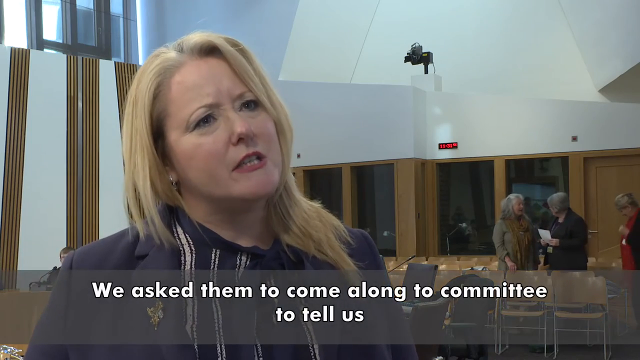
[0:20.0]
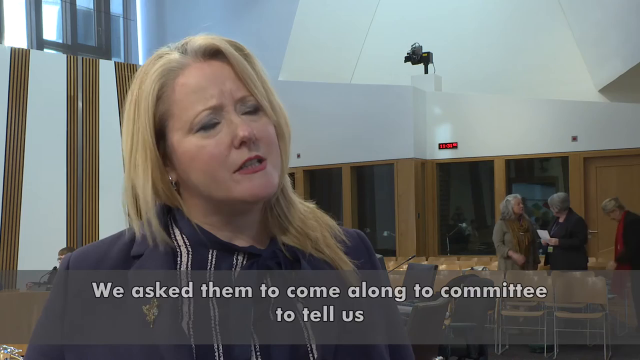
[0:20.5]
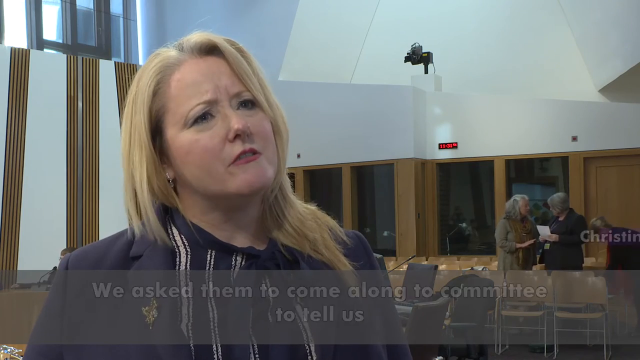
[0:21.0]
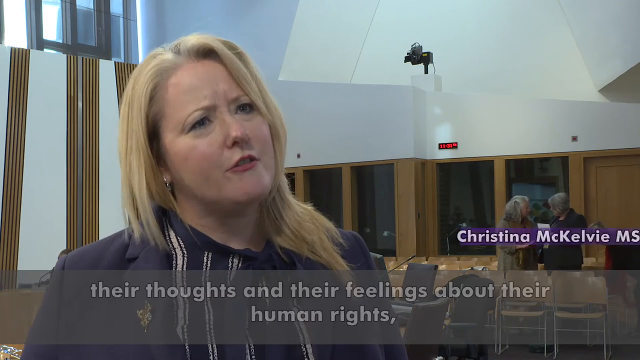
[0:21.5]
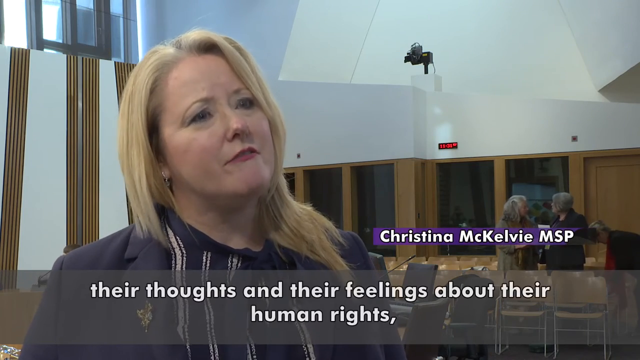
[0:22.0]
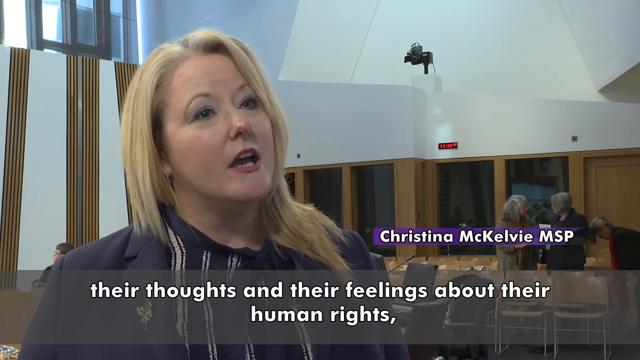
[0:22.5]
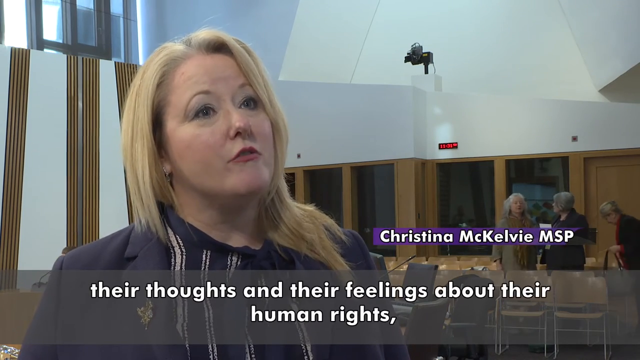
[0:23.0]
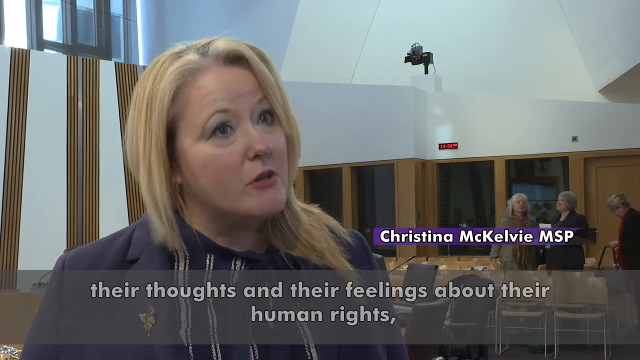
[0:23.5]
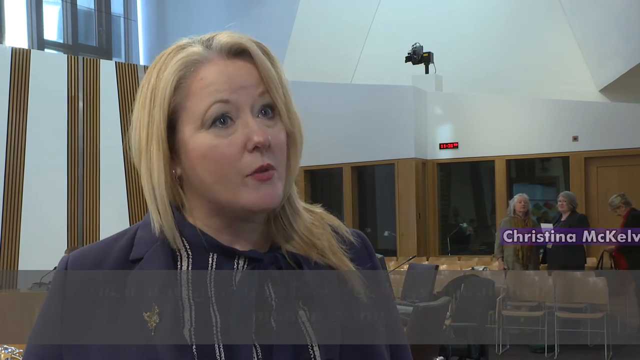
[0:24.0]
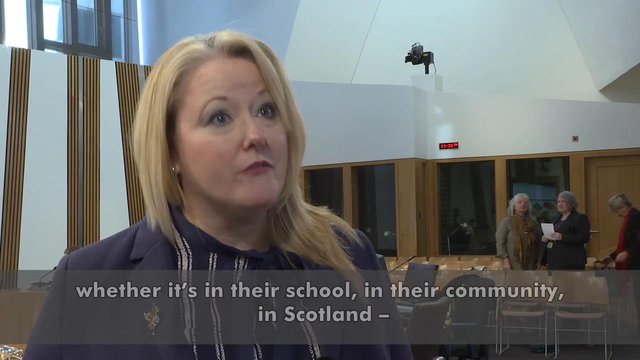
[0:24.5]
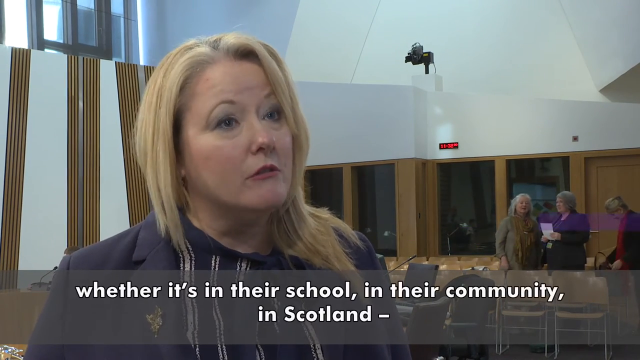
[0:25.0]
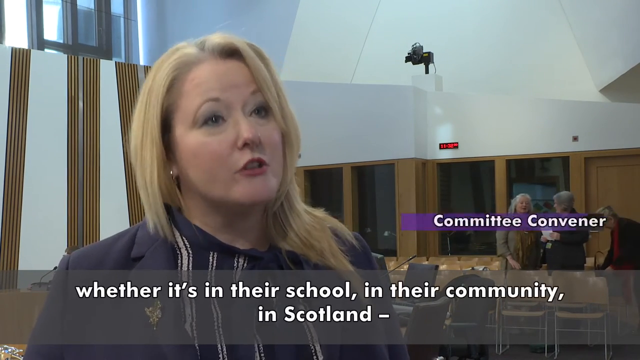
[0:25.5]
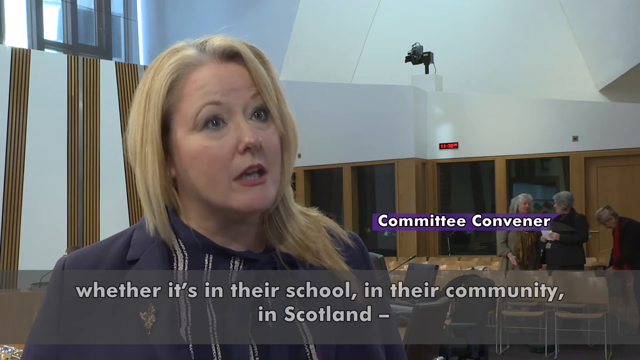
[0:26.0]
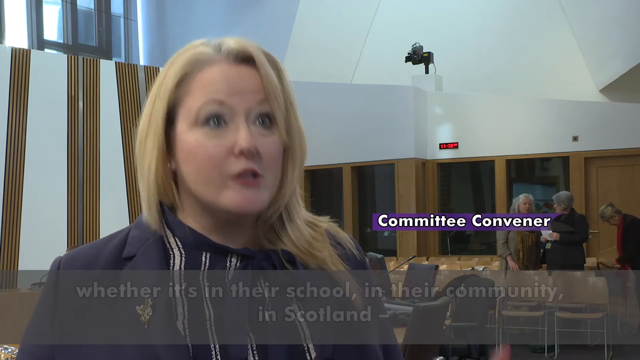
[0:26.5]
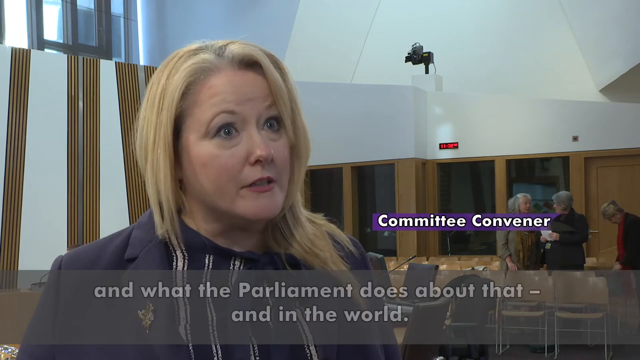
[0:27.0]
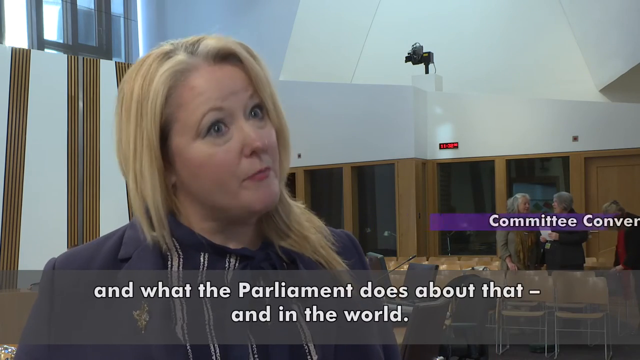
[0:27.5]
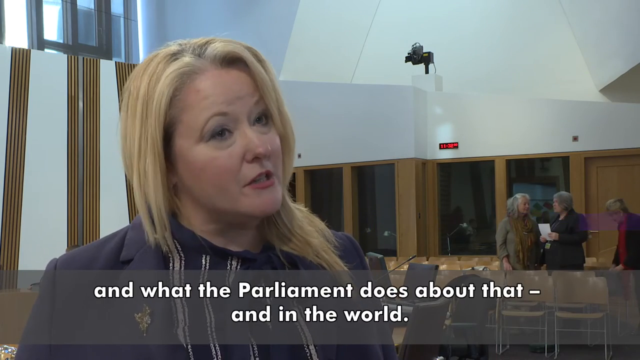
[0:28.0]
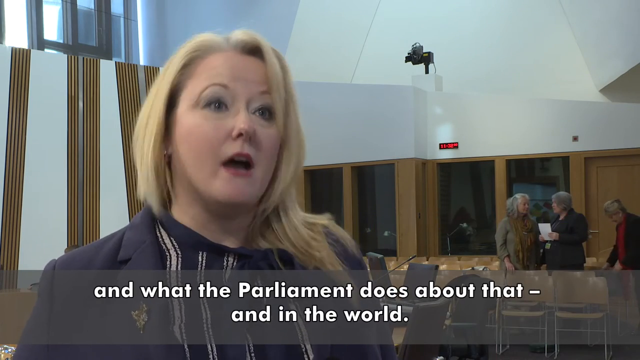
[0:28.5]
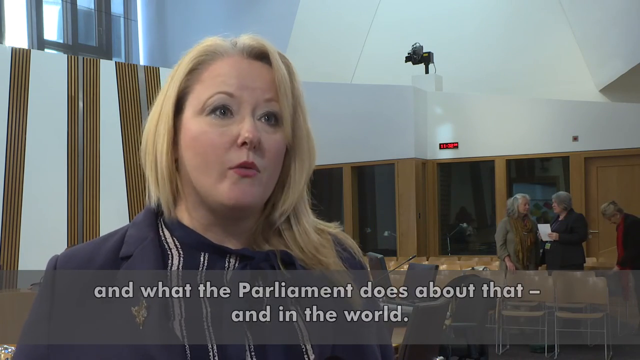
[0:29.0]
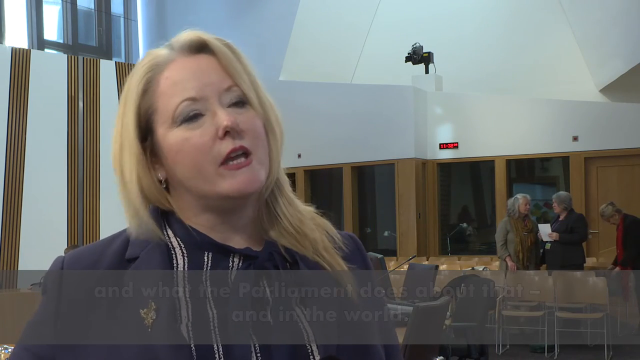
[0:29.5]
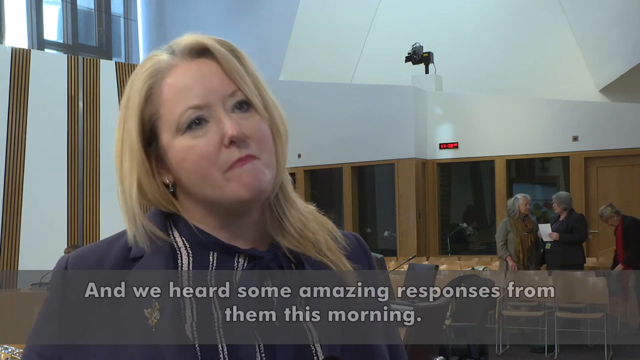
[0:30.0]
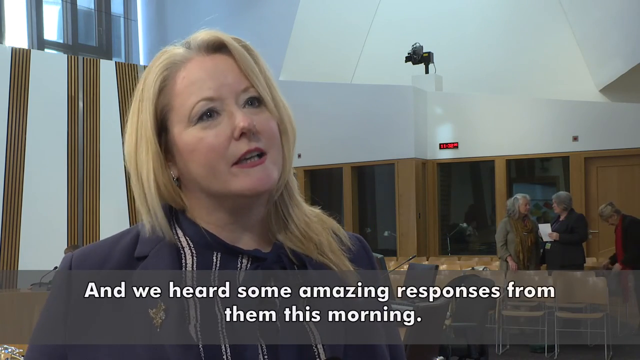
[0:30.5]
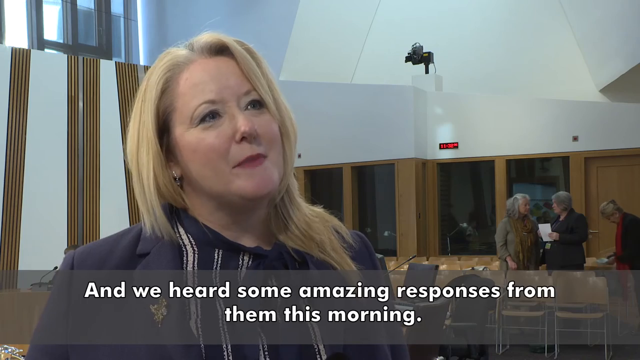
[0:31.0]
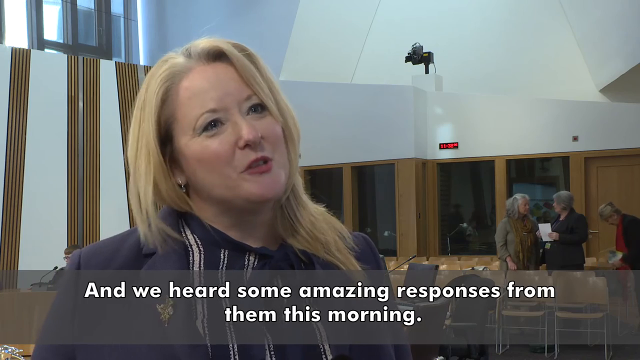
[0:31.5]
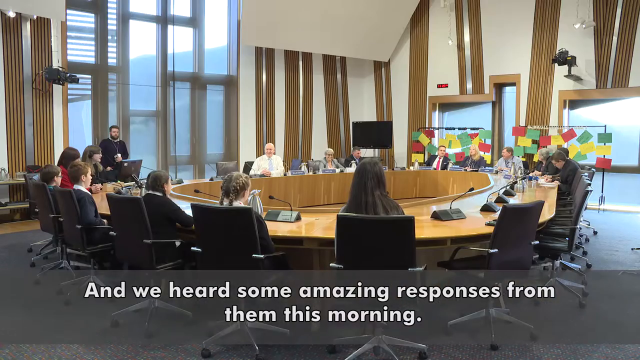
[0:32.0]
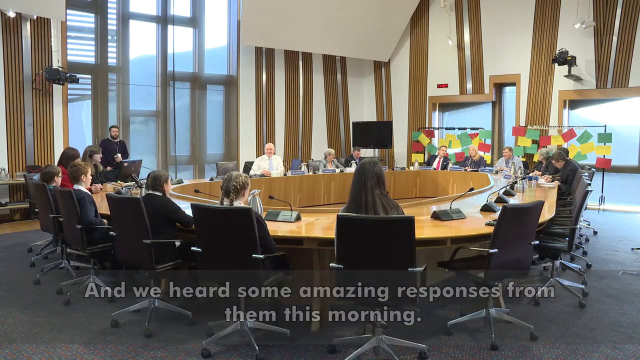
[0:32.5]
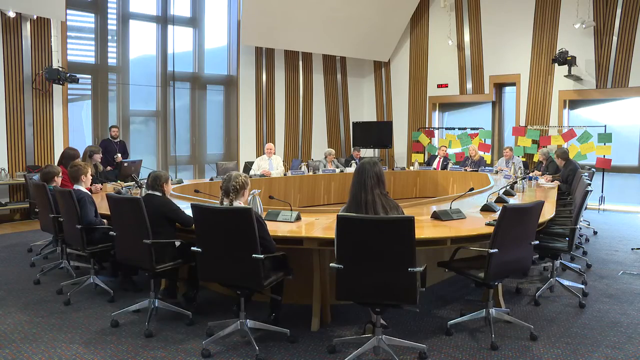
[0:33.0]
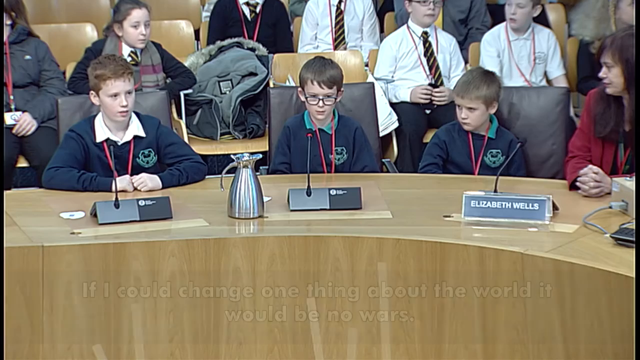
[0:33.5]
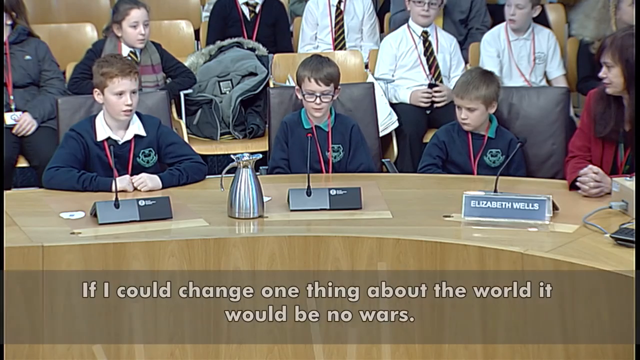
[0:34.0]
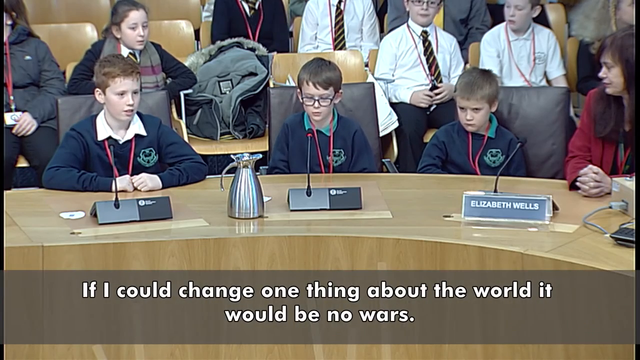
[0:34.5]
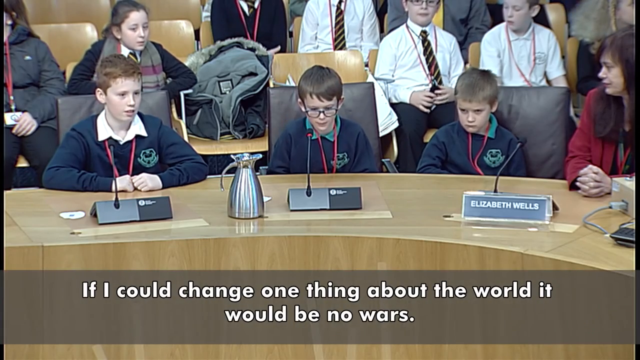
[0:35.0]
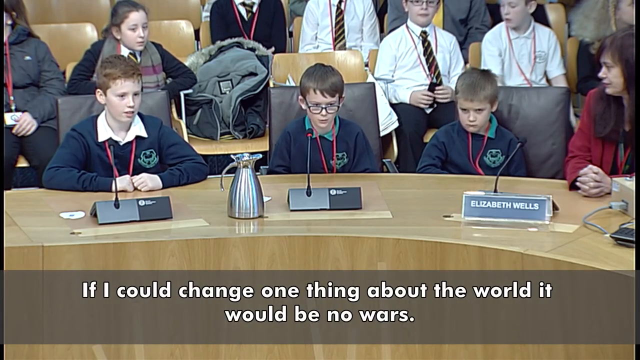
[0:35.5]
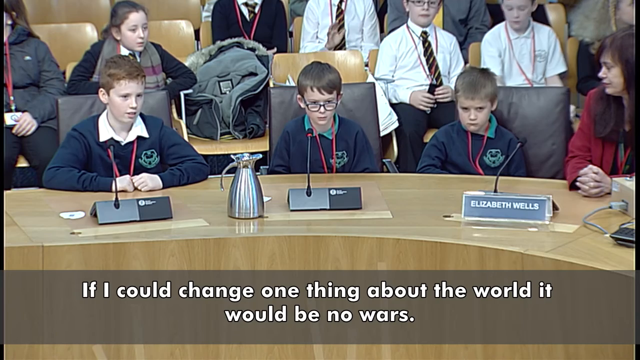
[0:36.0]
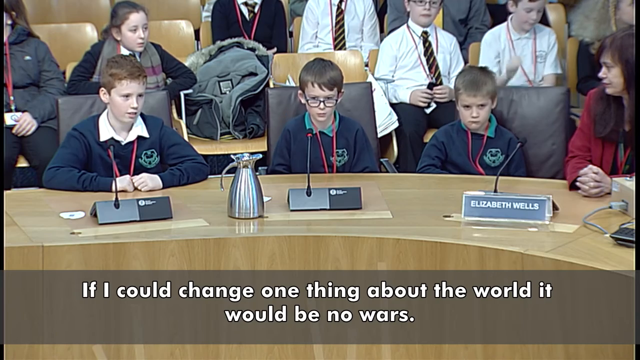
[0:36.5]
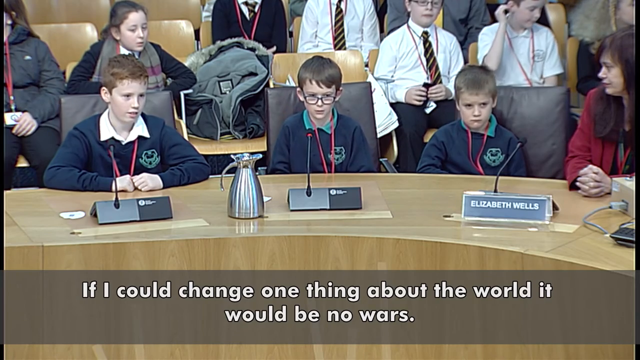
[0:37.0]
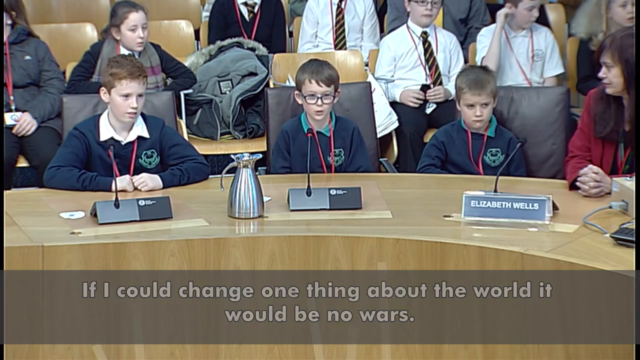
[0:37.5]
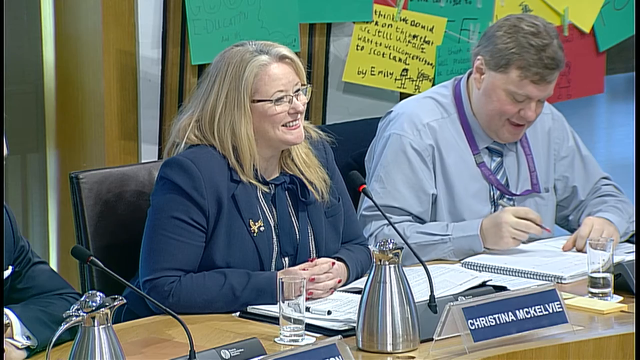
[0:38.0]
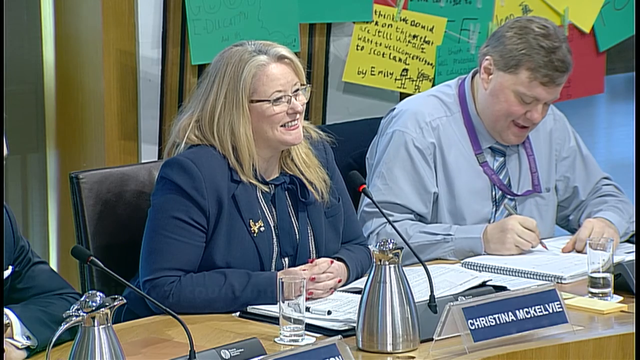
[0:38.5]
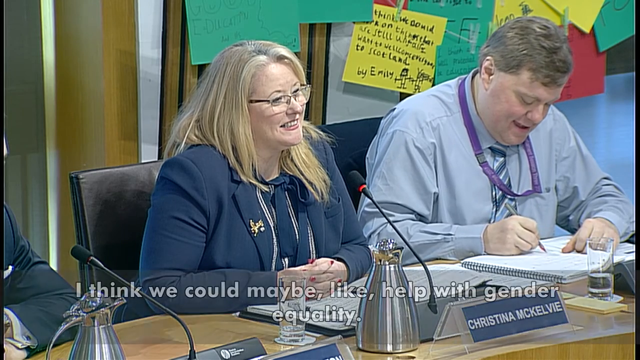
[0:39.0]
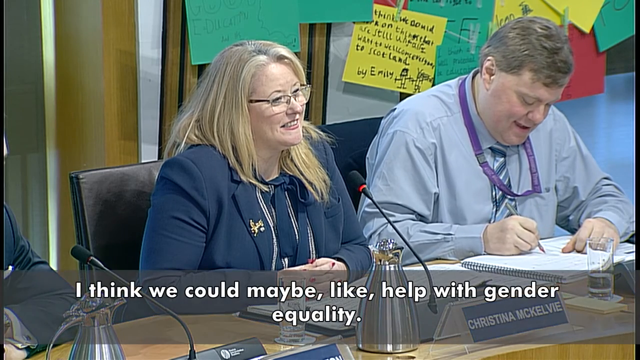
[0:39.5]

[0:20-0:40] The woman continues being interviewed, with the text "Committee Convener" to the right side of her. Text at the bottom, apparently what she is saying, reads "whether it's in their school, in their community, in Scotland and what the parliament does about that and in the world. And we heard some amazing responses from this morning." The video cuts to another shot of the room, followed by a shot of three children sitting at the desk, with text at the bottom reading "if I could change one thing about the world, it would be no wars. Thank you." It then cuts to two adults, both sitting at the desk, one of them writing in a notebook, with text at the bottom reading "I think we could maybe like help with gender equality." Then there is a cut.